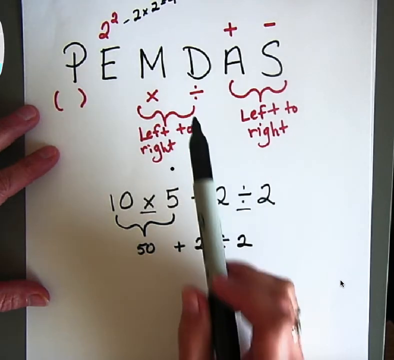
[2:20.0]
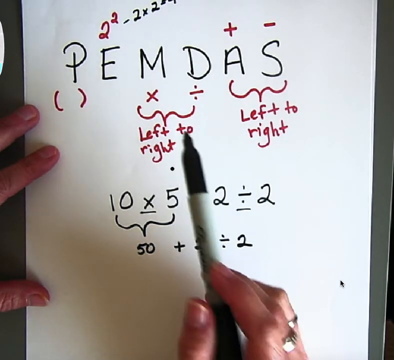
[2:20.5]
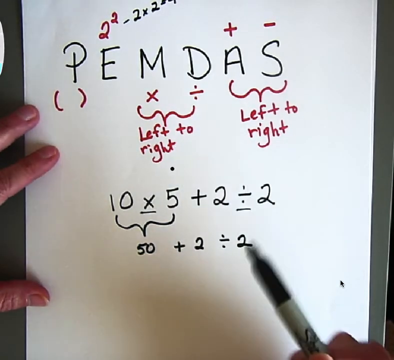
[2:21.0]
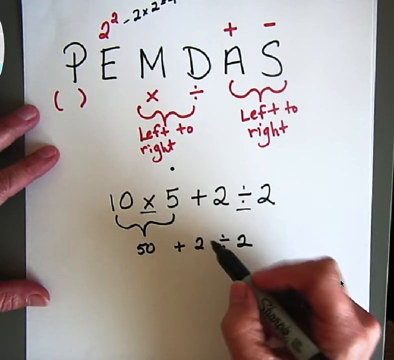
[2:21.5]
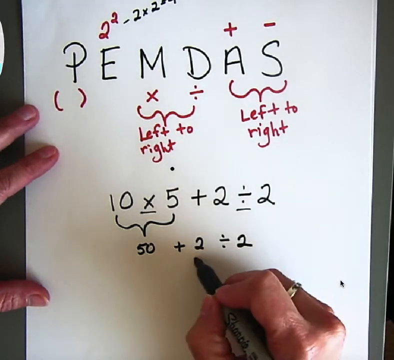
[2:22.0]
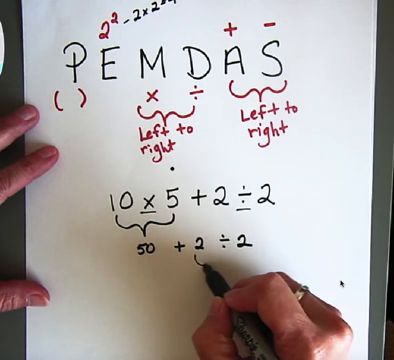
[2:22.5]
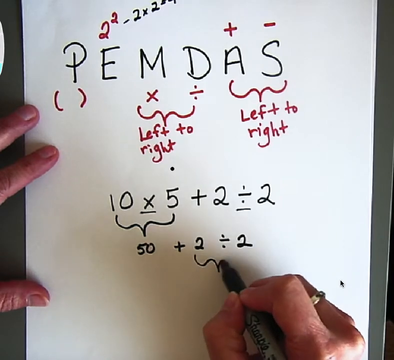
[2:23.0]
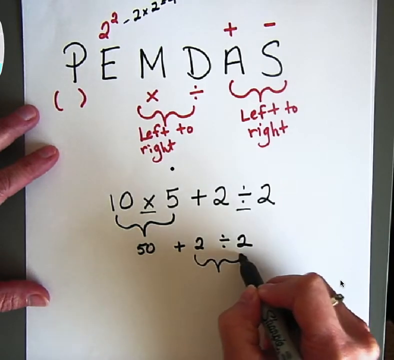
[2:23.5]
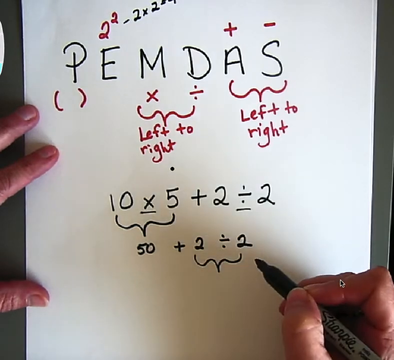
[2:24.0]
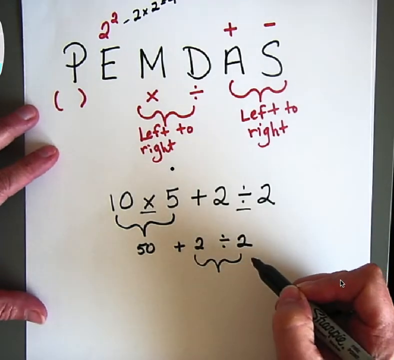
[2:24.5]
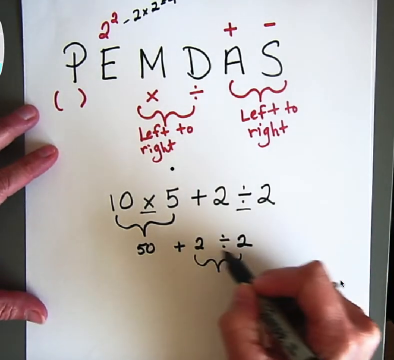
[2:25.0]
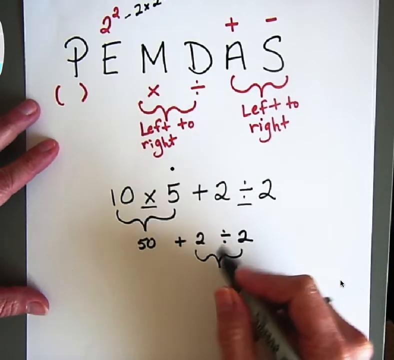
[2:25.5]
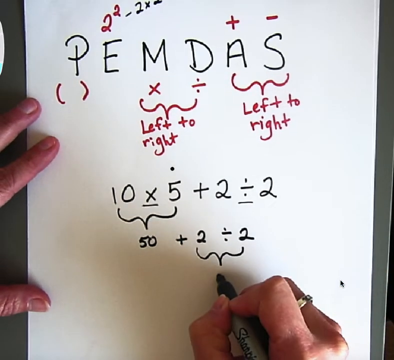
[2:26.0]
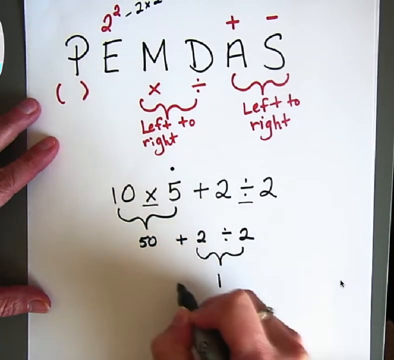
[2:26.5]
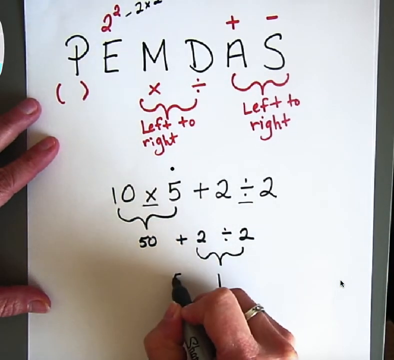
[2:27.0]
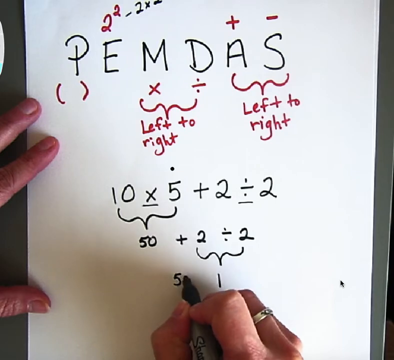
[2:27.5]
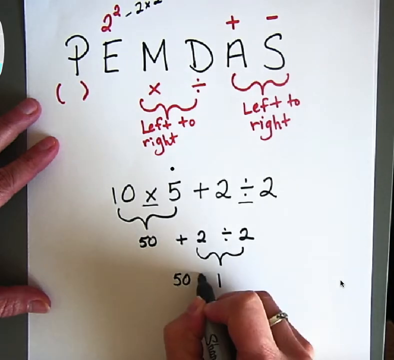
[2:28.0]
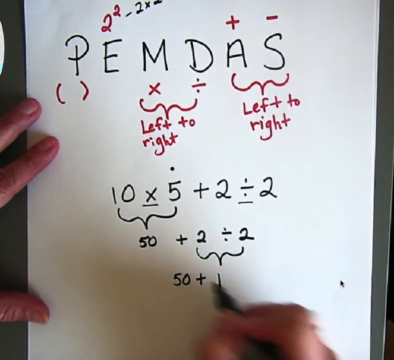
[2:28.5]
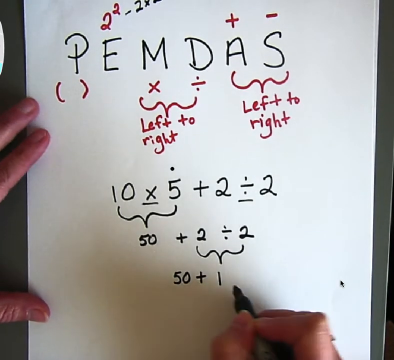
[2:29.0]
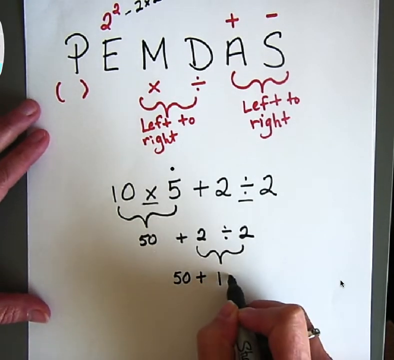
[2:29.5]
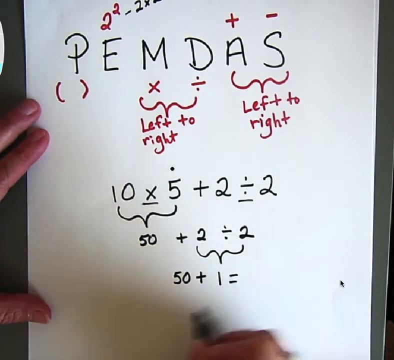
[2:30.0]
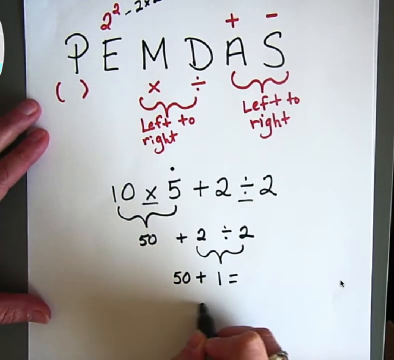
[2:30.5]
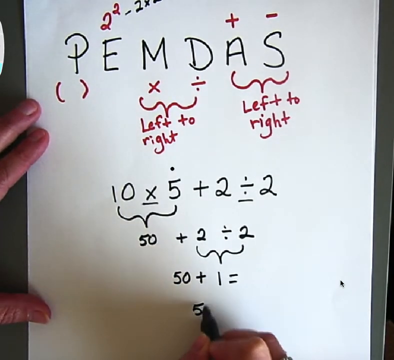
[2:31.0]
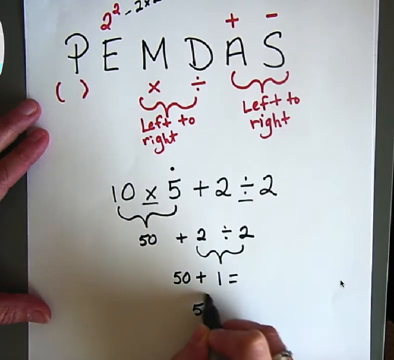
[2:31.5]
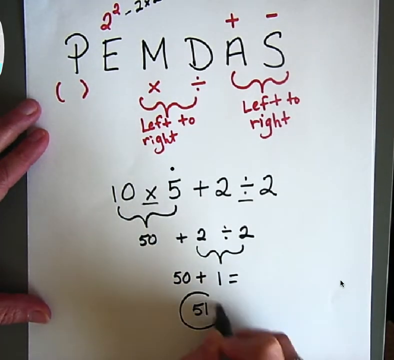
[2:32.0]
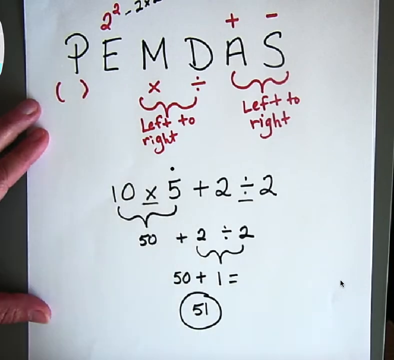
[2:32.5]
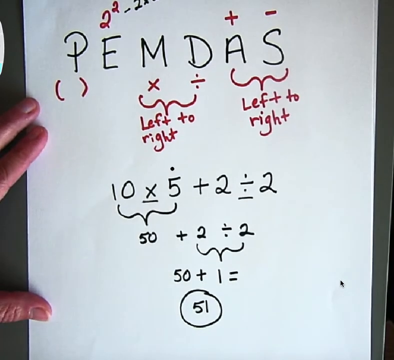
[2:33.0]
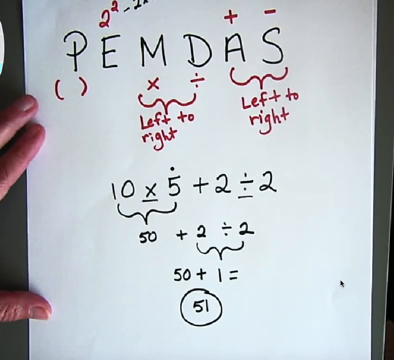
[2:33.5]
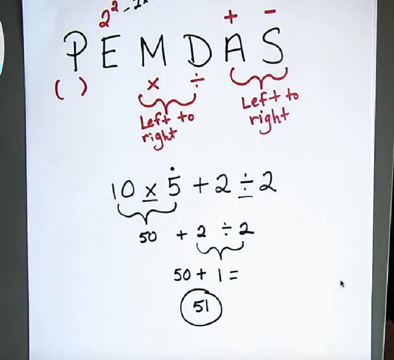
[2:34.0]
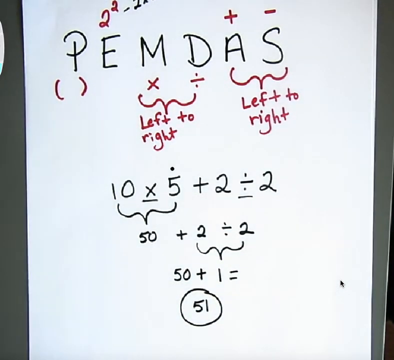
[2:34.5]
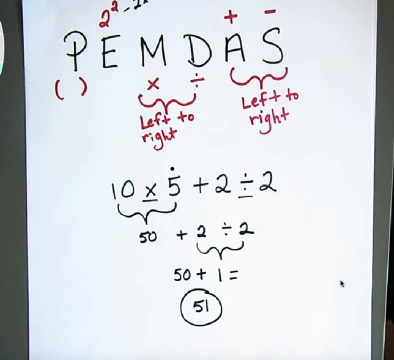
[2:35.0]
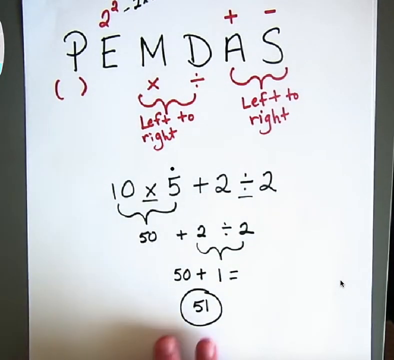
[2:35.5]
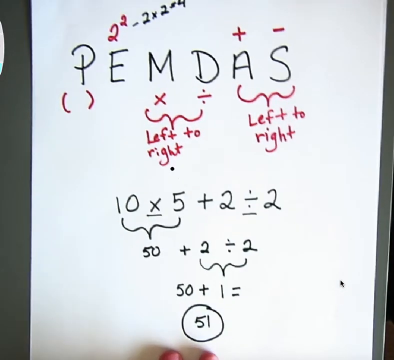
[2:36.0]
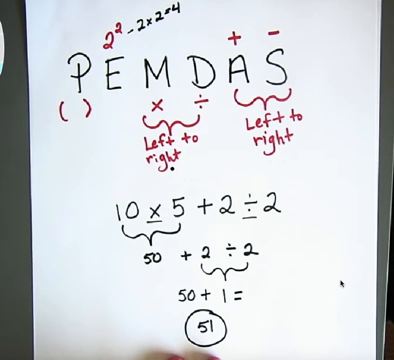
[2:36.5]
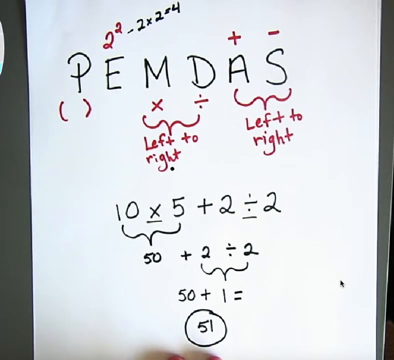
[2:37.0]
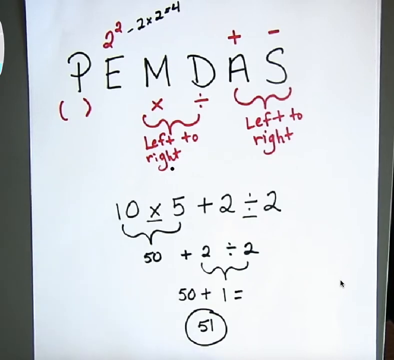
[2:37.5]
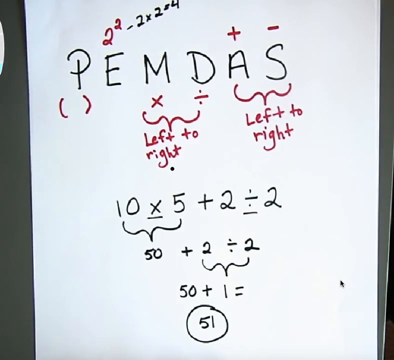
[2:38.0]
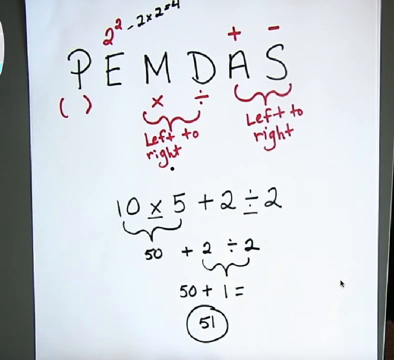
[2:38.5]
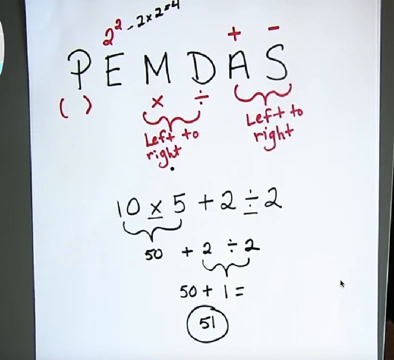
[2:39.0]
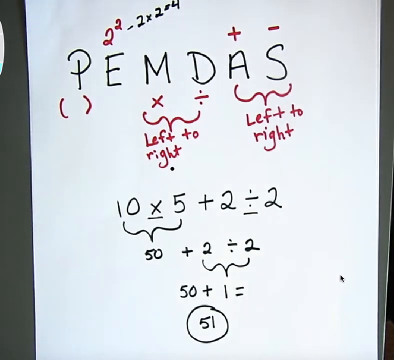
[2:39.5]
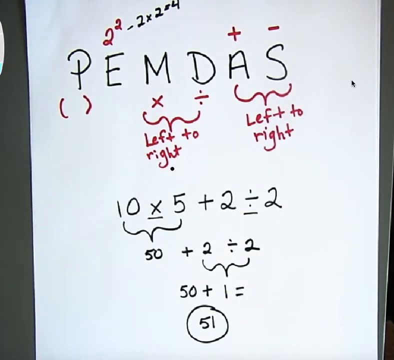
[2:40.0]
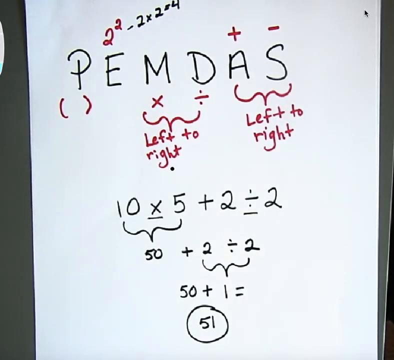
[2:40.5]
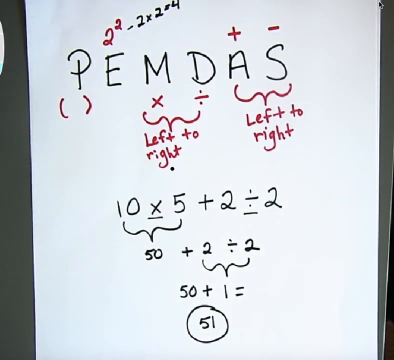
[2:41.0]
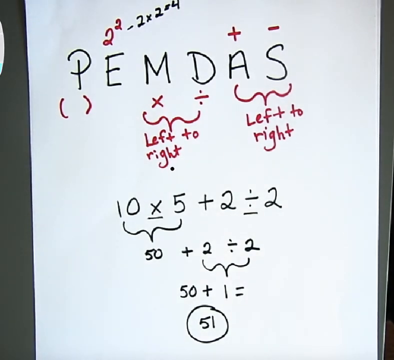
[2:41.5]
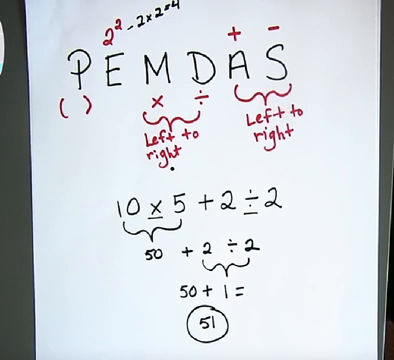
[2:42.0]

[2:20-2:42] A couple of pieces of paper have "PEMDAS" in capital letters, each letter written in black with a space between. Above the E is a red 2 to the second power, and beside it in black is minus 2 times 2 equals 4. Above the A is a plus sign and above the S a minus sign. Below the capital P is a red parentheses, under the M a red X, and under the D a red division sign. A squiggly line under the X and division sign goes to a red statement that says "left to right", and another red squiggly sign under the A and capital S points to a red "left to right". The person holds the paper in place with the left hand and with the right hand points toward "left to right". He goes down and writes a squiggly line under the 2 divided by 2 in the second math formula at the bottom, then writes 50 plus 1 equals 51 and circles the 51. The paper moves a little up and down and to the side, and a shadow is visible. A mouse pointer moves up to the right and off screen.